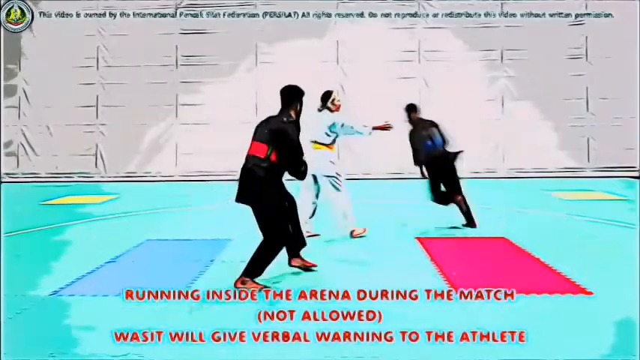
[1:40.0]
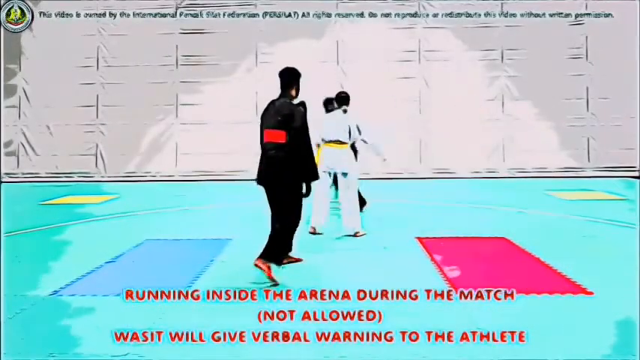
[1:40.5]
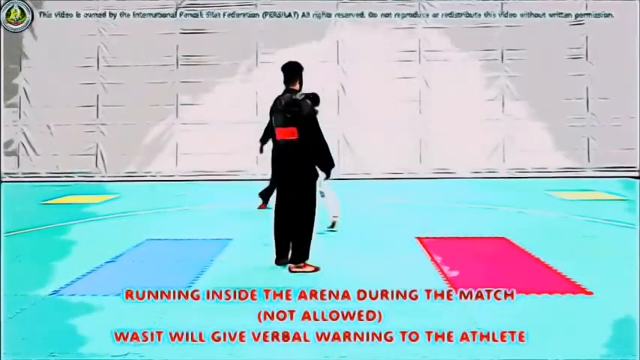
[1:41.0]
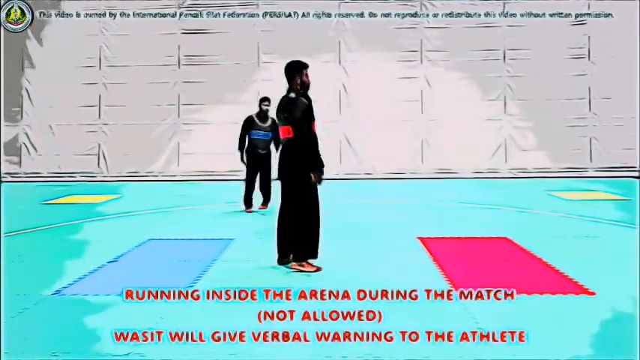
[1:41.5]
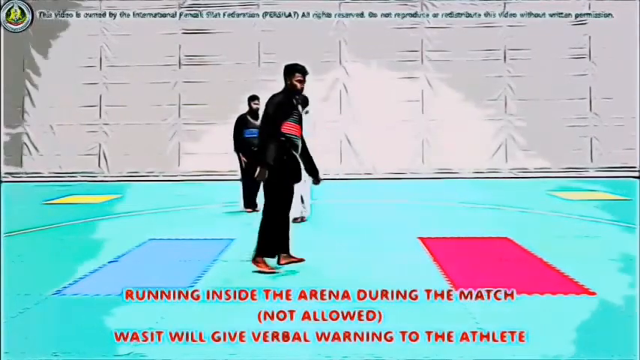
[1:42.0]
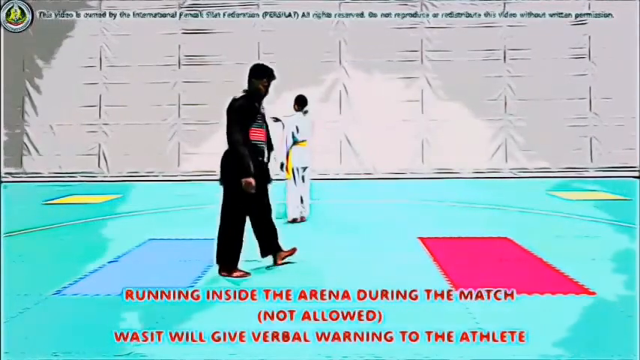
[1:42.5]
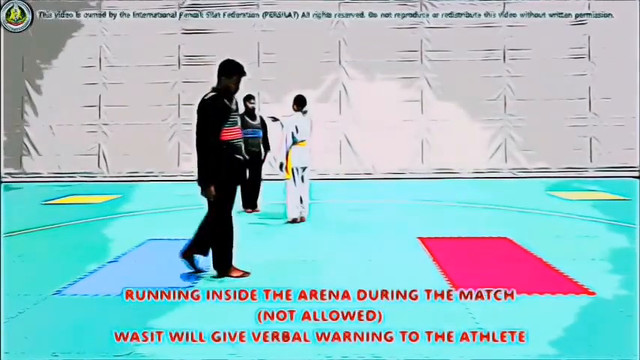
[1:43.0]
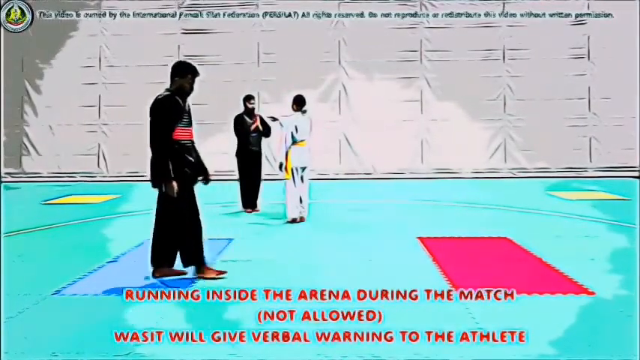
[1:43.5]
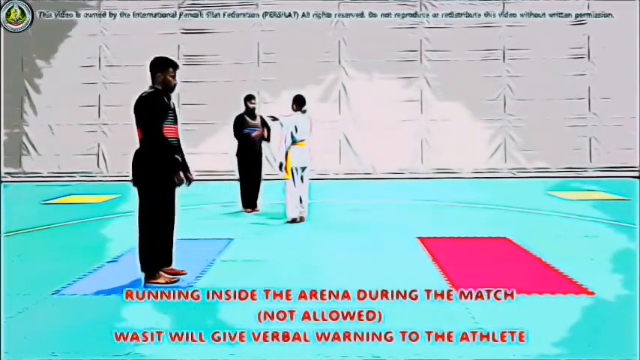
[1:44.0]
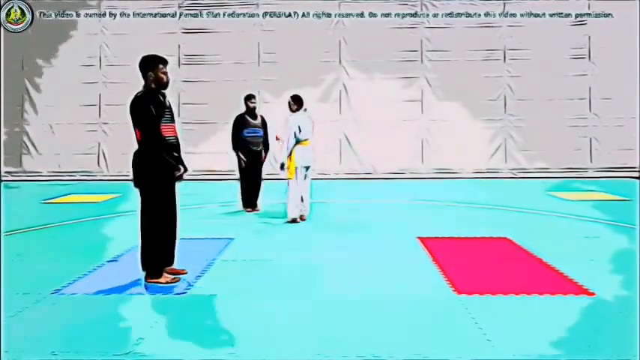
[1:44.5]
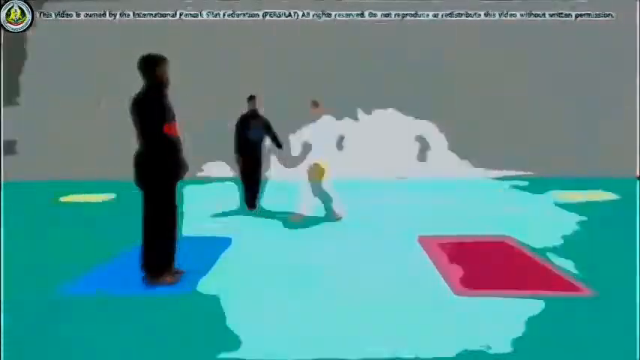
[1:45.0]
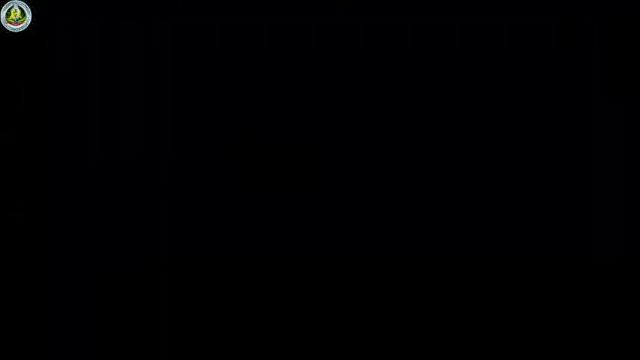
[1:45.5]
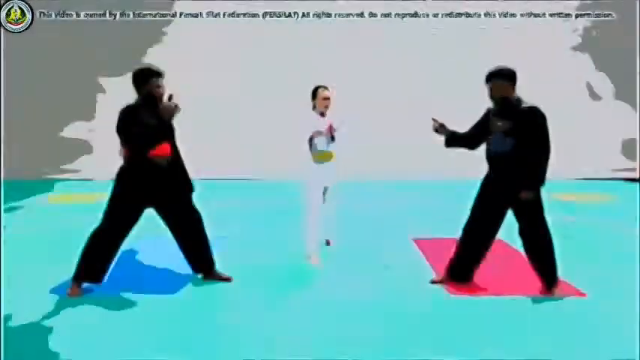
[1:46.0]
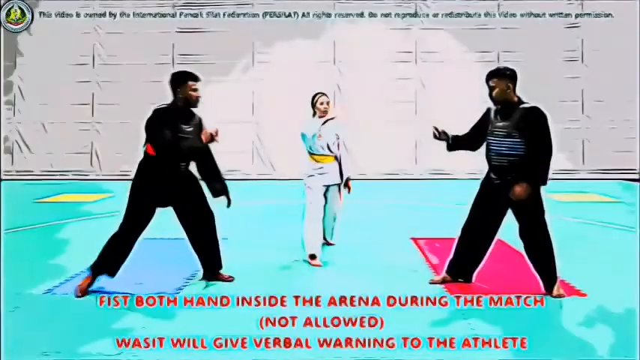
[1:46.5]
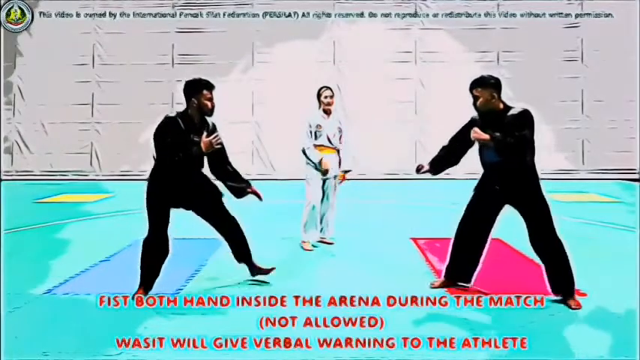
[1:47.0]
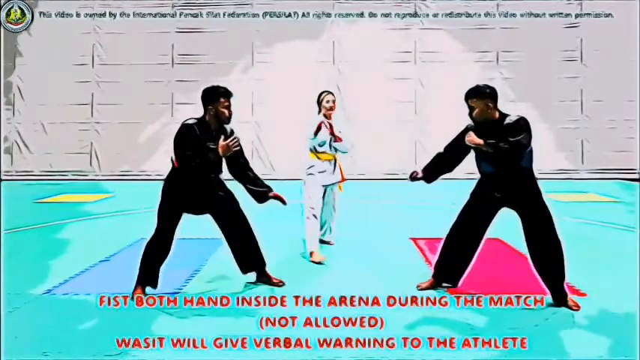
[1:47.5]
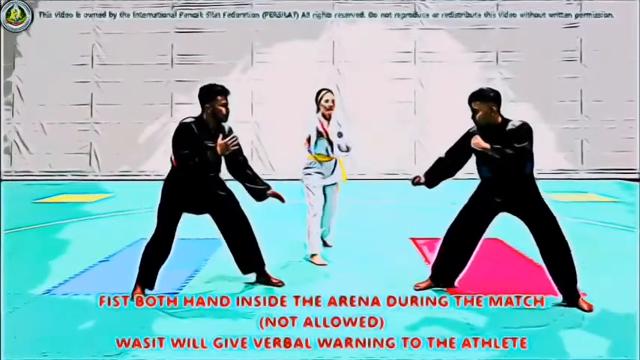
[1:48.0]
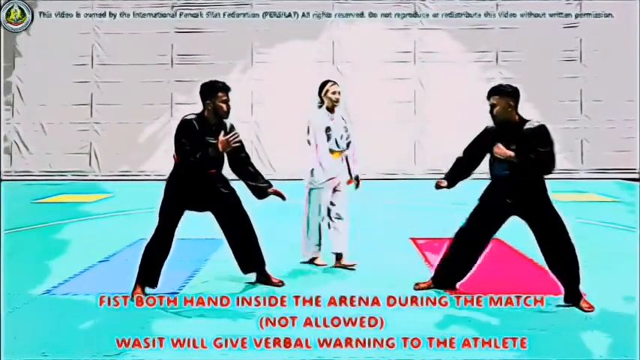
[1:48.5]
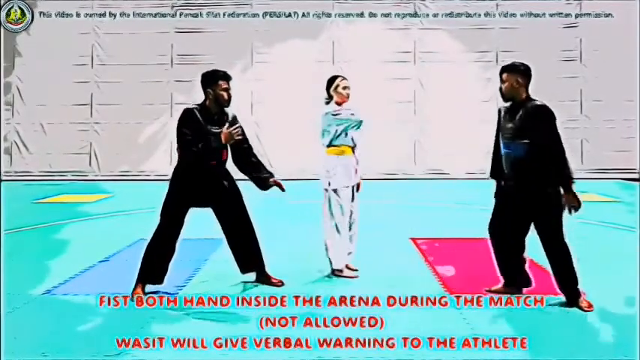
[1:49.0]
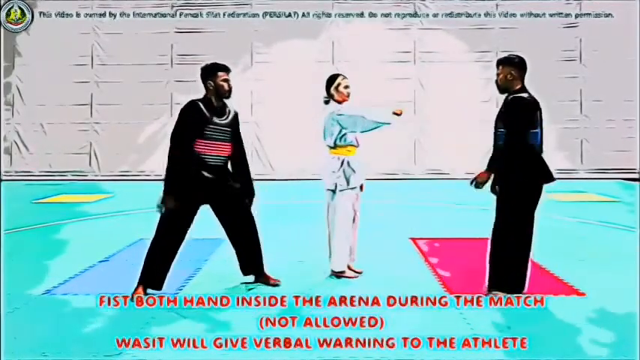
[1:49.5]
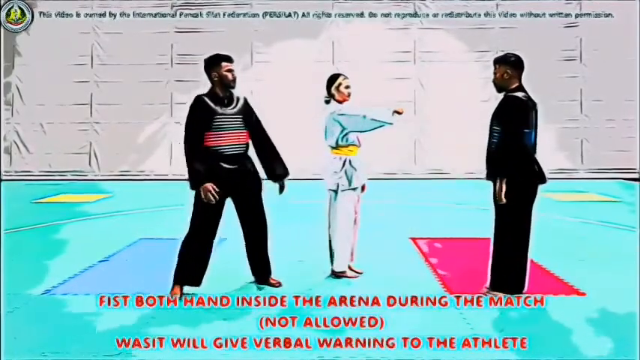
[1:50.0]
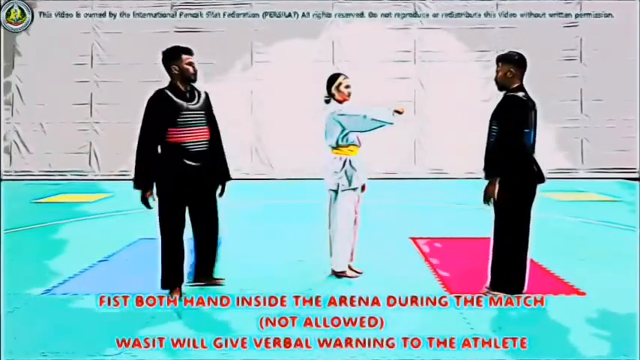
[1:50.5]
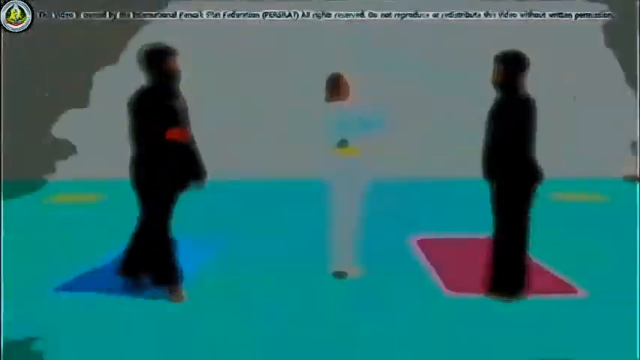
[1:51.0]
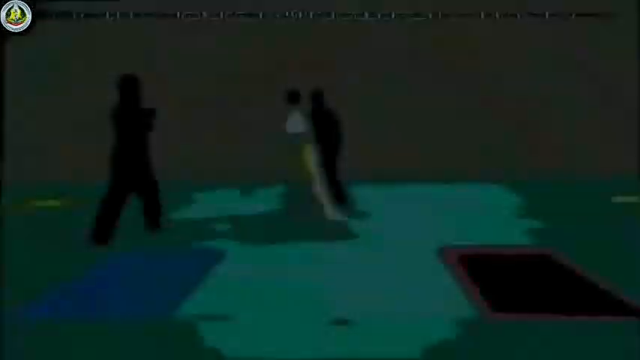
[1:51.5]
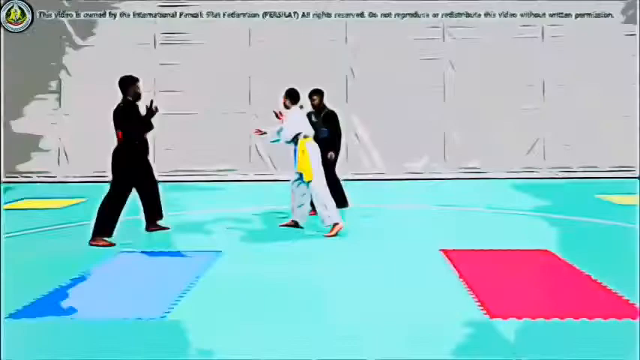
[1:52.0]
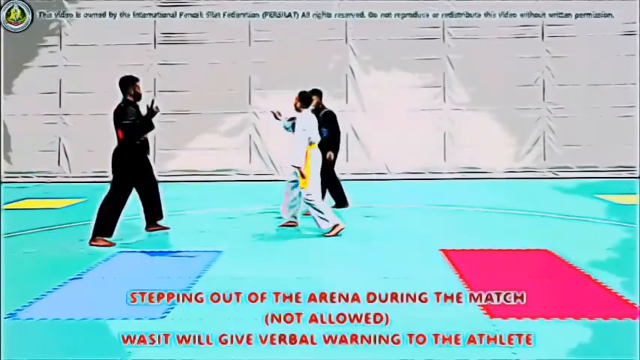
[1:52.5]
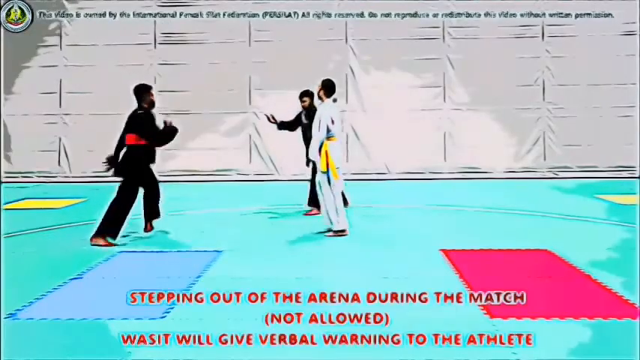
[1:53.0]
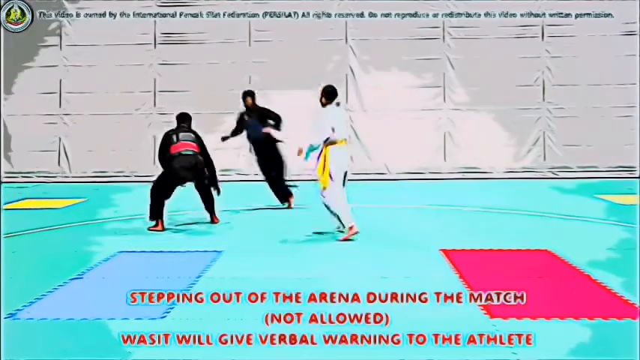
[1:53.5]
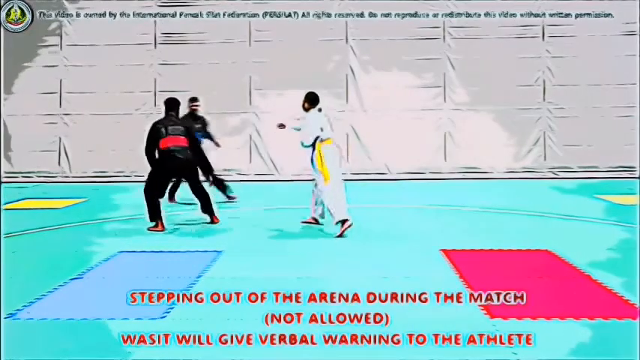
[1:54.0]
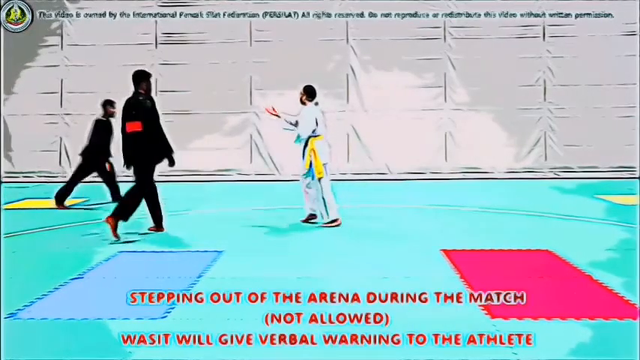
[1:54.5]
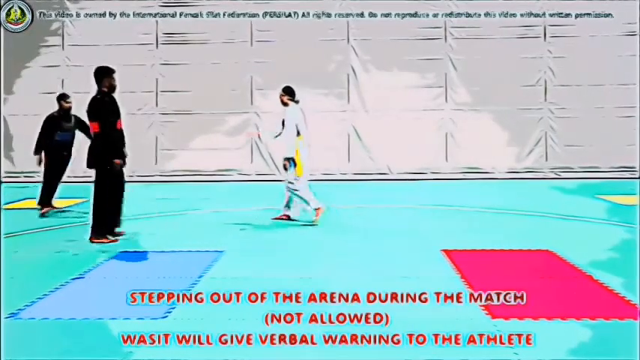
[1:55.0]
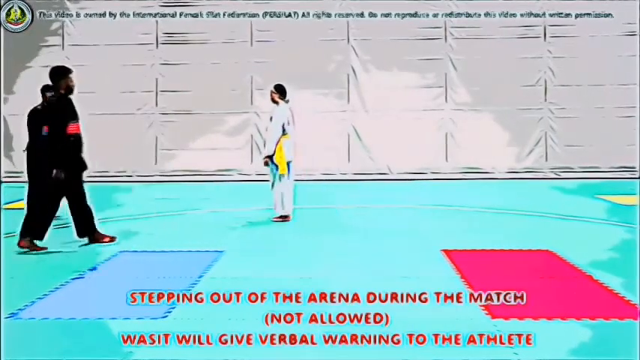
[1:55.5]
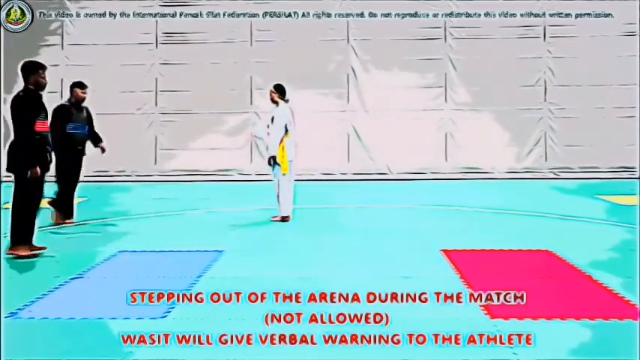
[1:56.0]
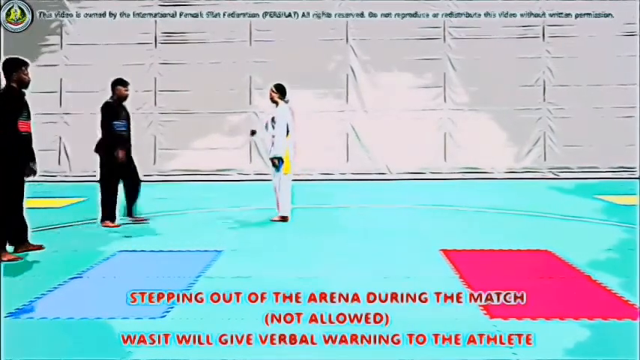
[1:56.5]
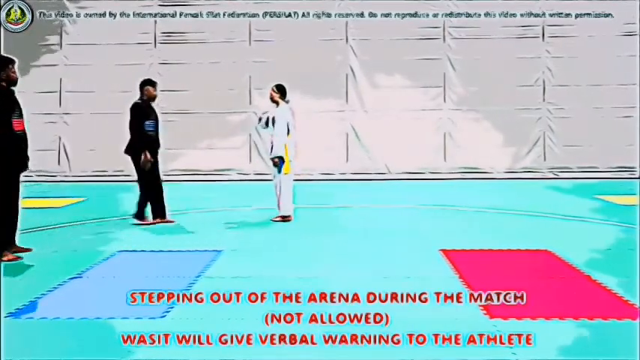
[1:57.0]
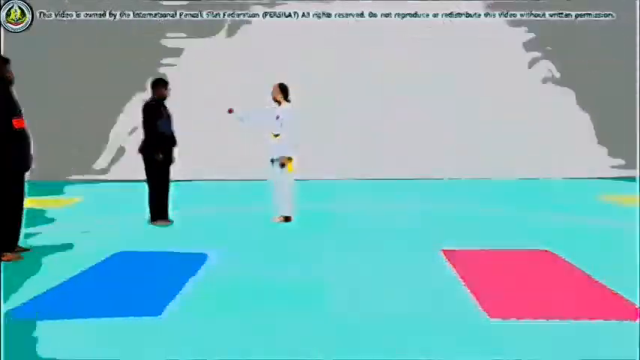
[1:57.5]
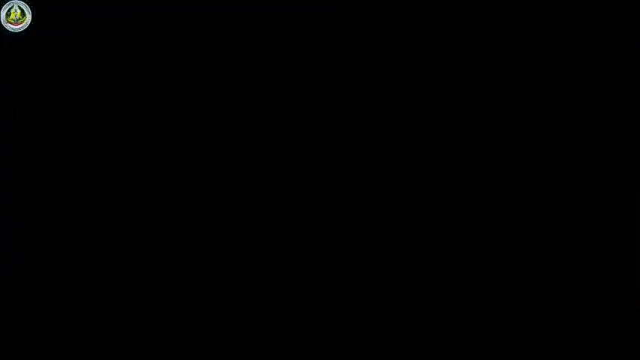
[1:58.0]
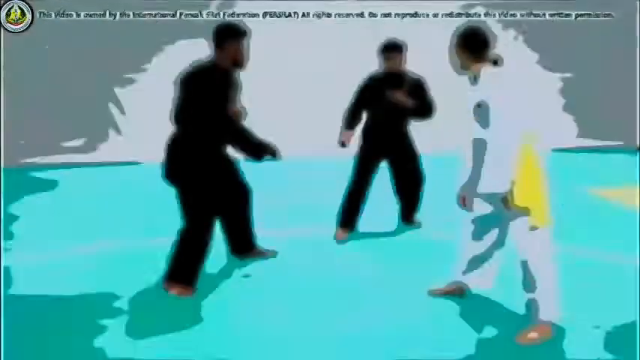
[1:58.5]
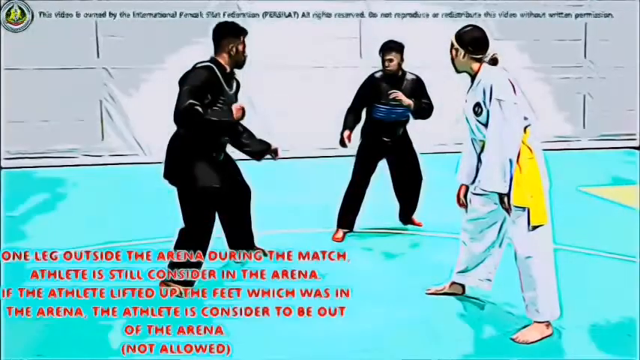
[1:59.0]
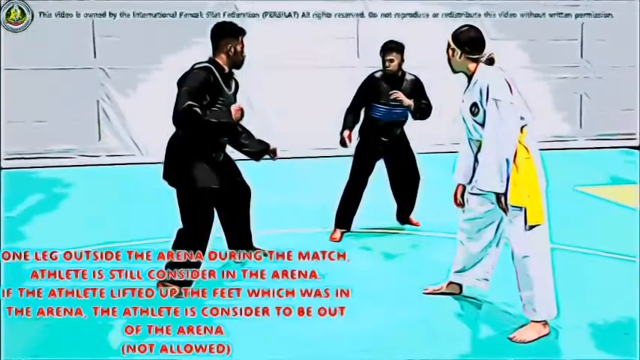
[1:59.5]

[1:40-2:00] Text reads "stepping out of the arena during the match. Not allowed" and states that the Wossip will give a verbal warning, followed by a rule about one leg outside the arena. Another rule reads "fist both hands inside the arena during the match", indicating both athletes are to keep their hands in fists. The video moves quickly, and the referee gives many verbal warnings.